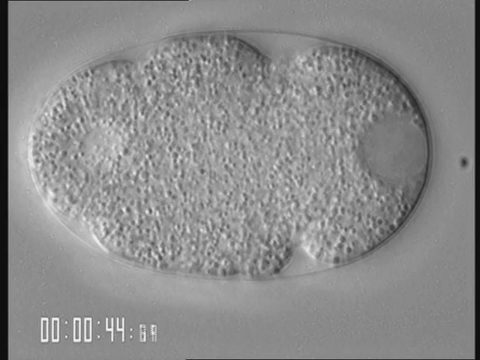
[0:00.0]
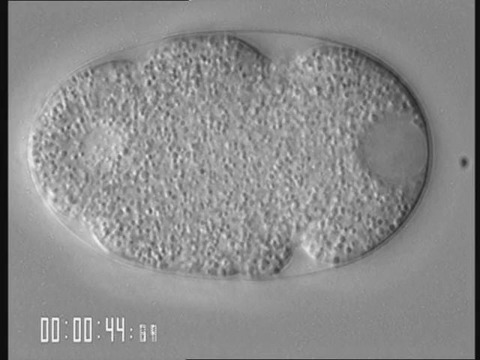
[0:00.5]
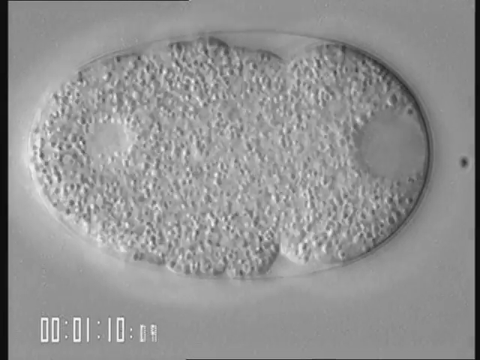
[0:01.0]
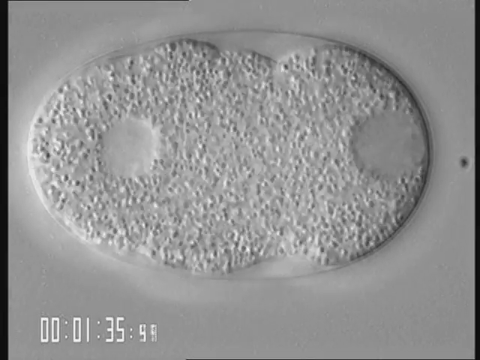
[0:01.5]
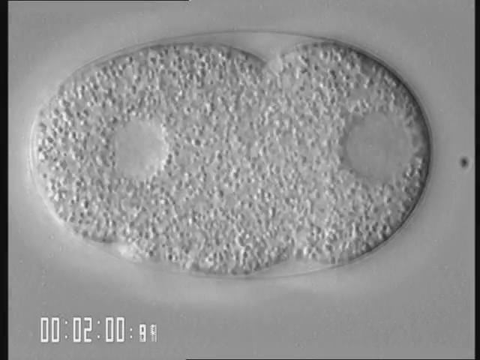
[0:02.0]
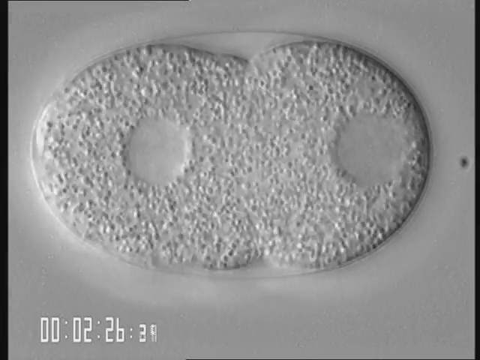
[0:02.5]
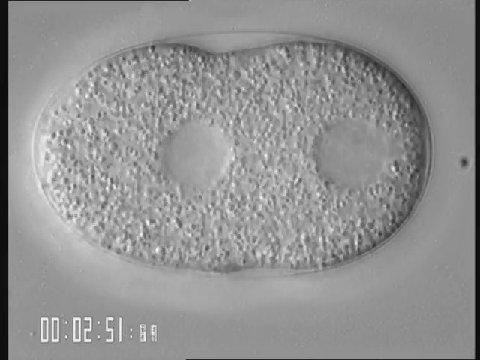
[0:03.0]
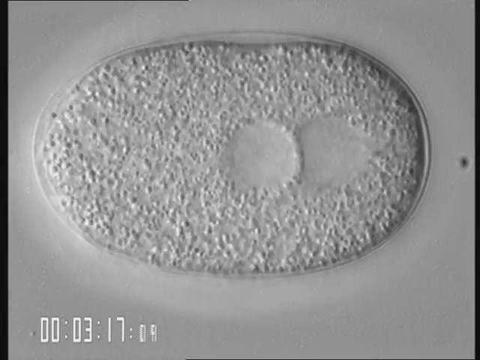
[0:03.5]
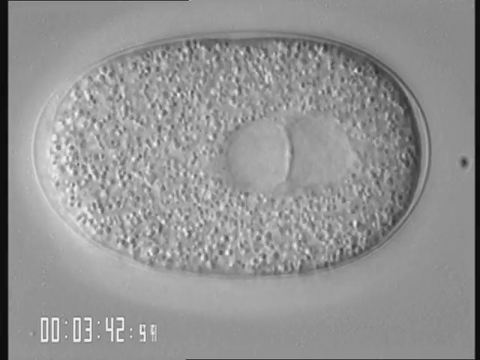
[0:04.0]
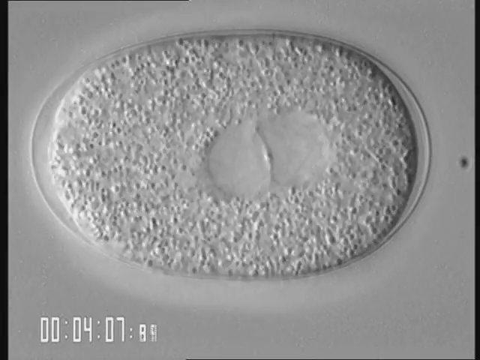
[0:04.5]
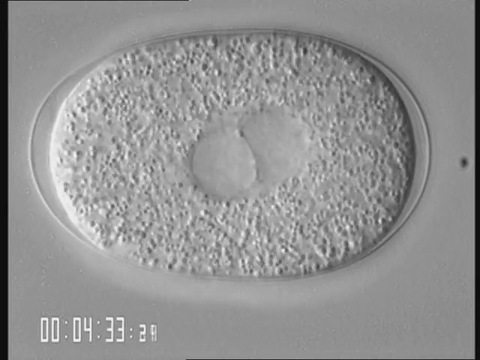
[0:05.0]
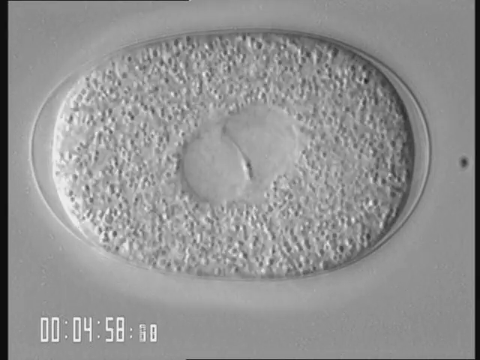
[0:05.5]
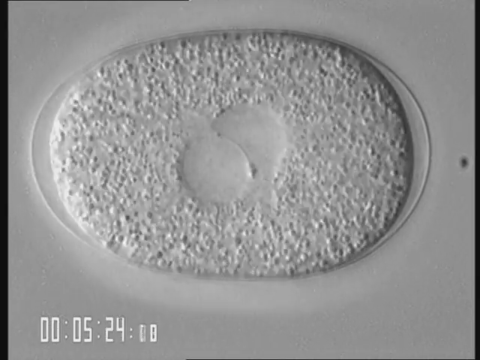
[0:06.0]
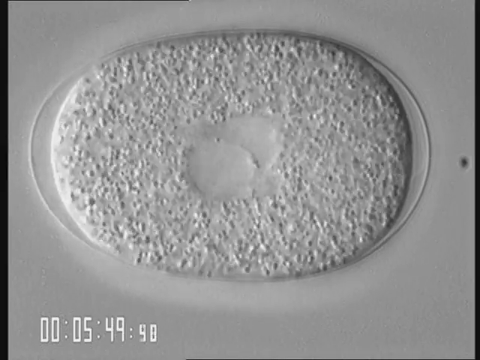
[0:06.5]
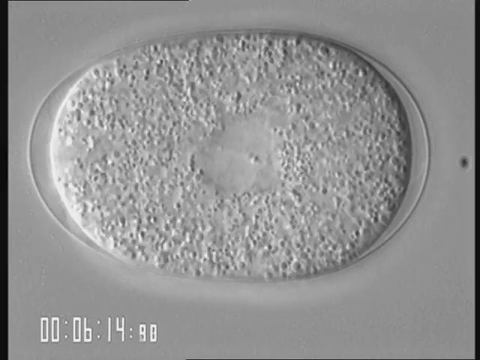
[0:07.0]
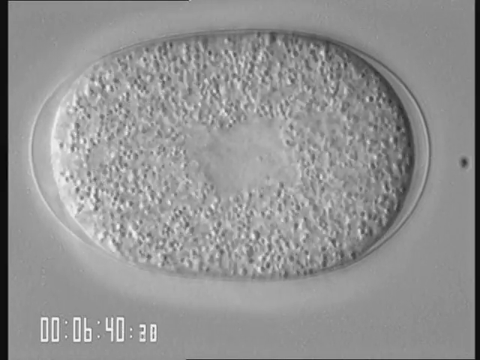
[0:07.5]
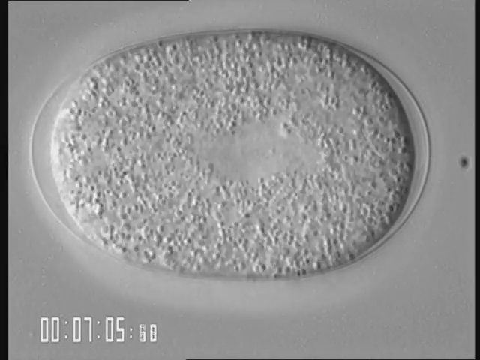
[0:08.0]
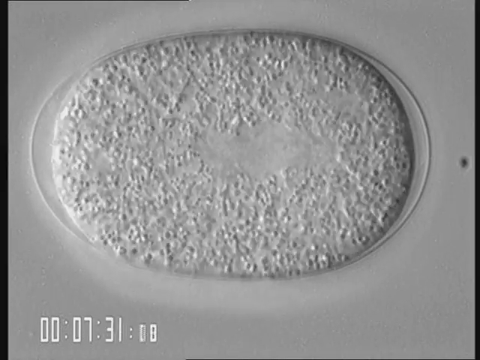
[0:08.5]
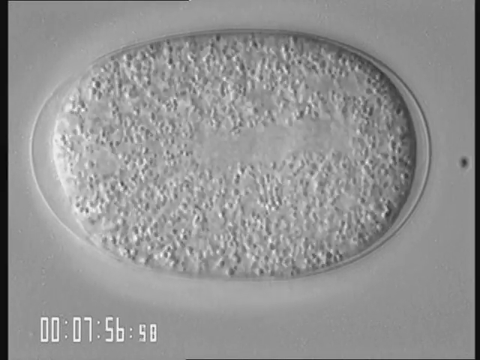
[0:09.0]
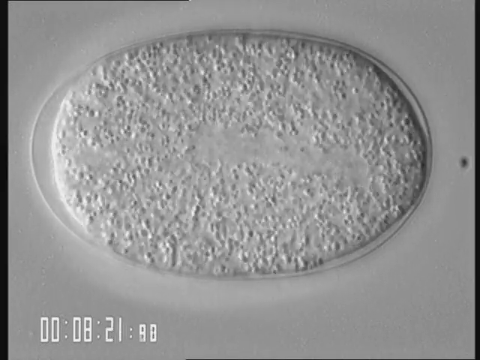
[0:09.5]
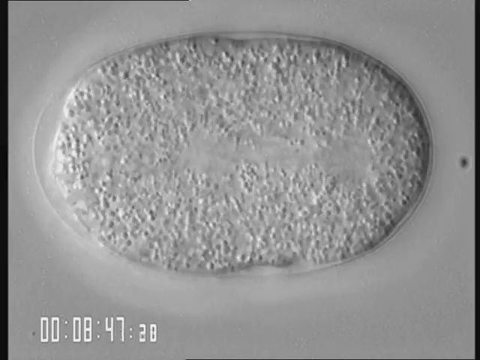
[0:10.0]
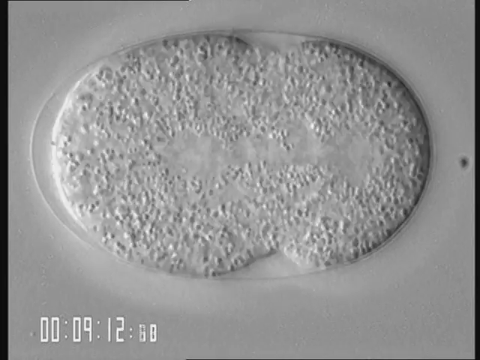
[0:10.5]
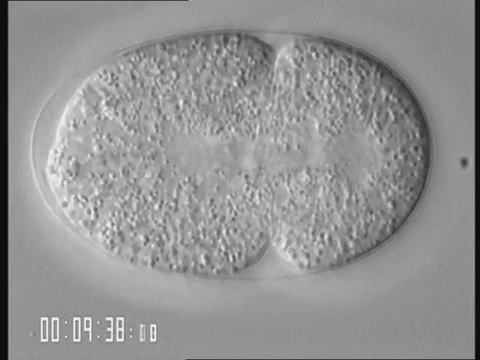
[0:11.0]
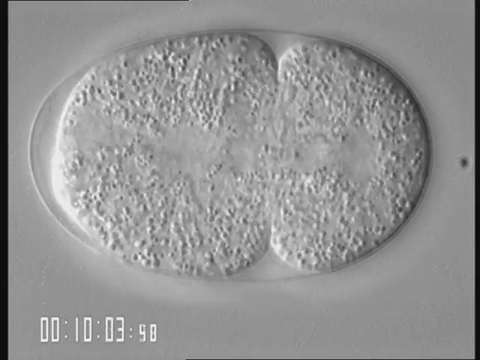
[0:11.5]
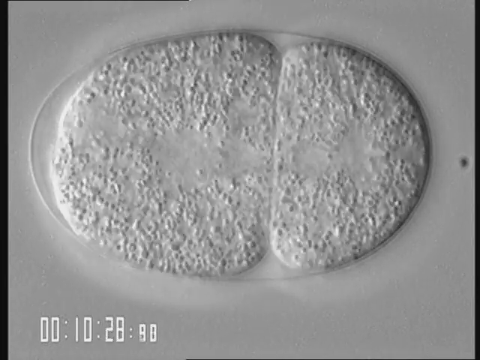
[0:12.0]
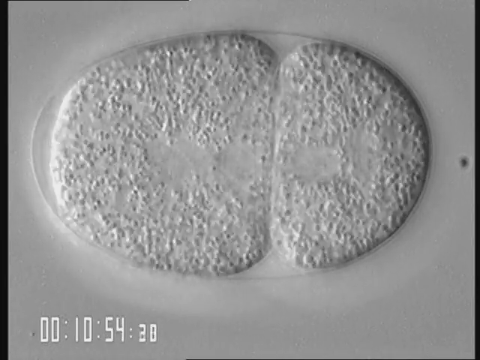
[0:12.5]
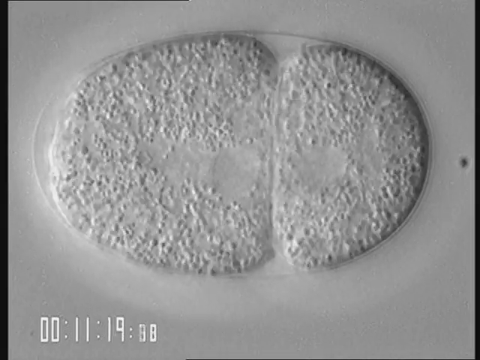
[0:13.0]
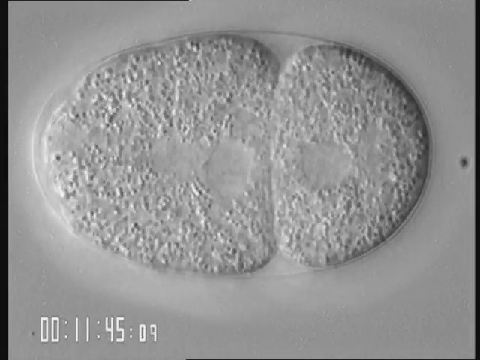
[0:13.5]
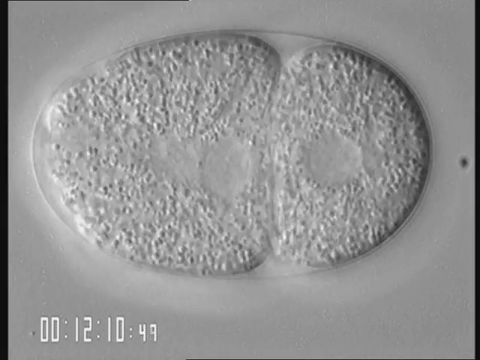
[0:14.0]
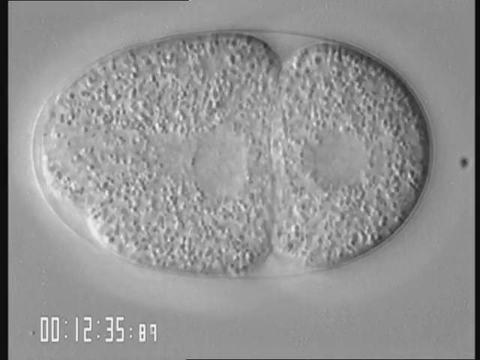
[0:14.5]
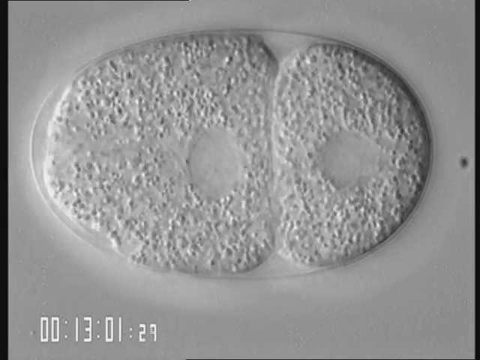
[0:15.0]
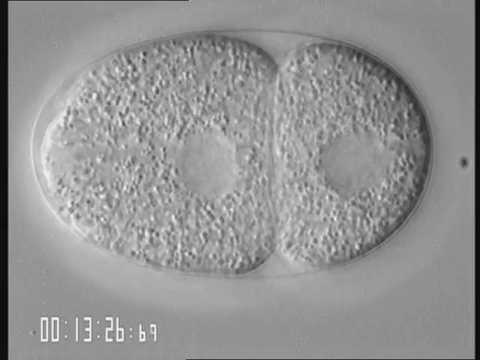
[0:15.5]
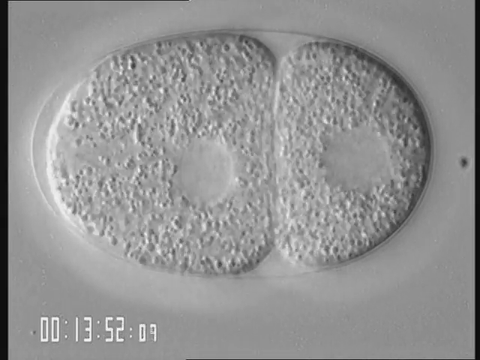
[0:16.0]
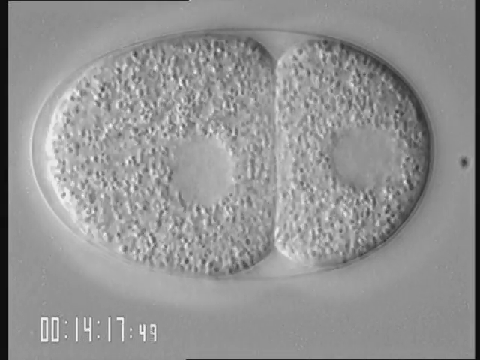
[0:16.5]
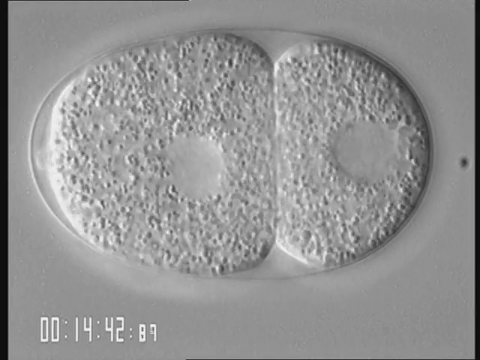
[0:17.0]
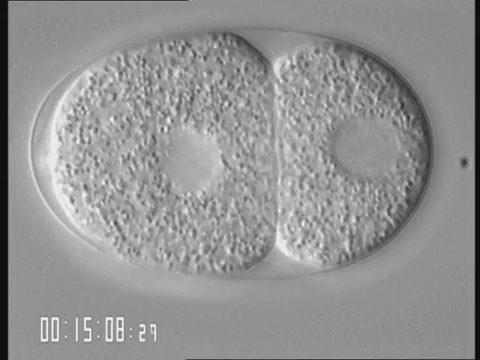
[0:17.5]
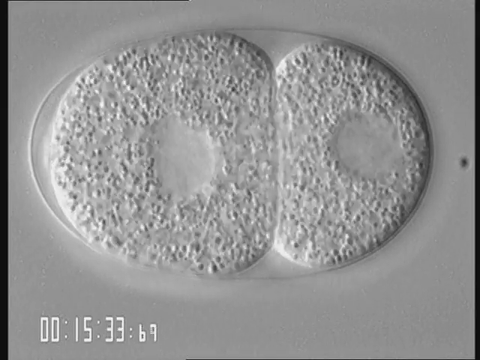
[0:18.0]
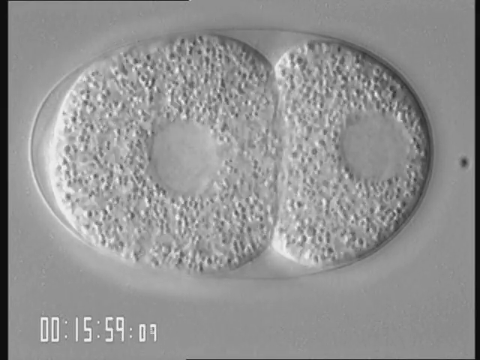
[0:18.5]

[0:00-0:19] The footage appears to be taken through a very strong microscope, and the subject could be some sort of cell. At first it is quite undefined, then two distinct dots, one on the left-hand side and one on the right-hand side, start moving towards each other. The two dots completely engulf each other, move to the centre and become one. The entire thing then starts to divide into two, with each half having one of the dots on it. The right-hand one is much smaller than the left-hand one. The structure is a horizontal oval shape. The little dots seem to be more like indents. It looks quite textured, with lots and lots of movement within it, and the movement does not go beyond the oval. The oval looks artificial, as if it has been placed there deliberately for observation.